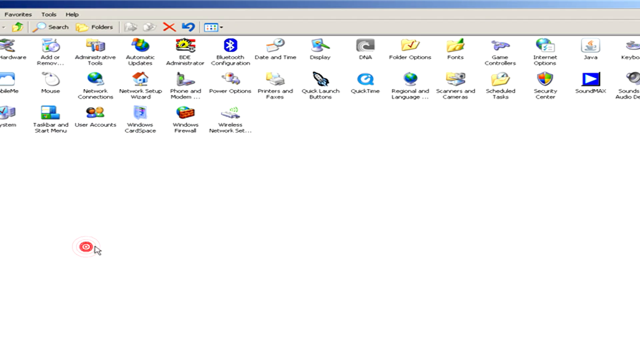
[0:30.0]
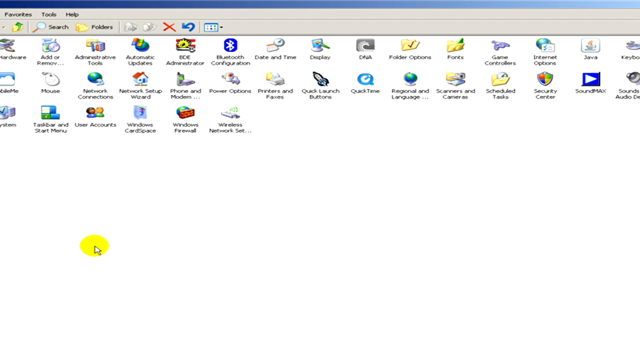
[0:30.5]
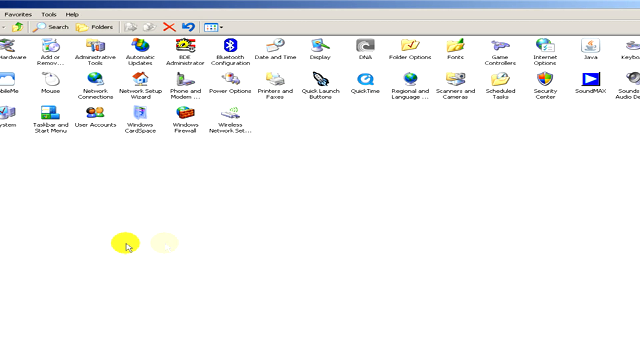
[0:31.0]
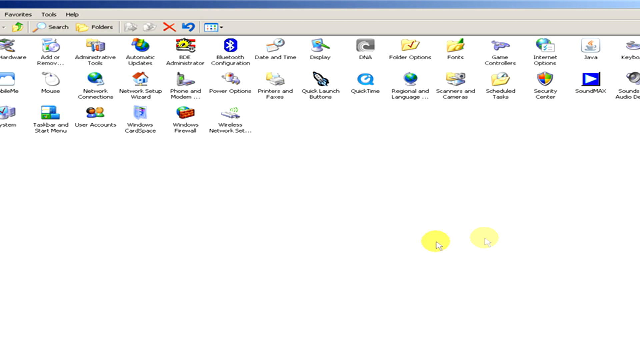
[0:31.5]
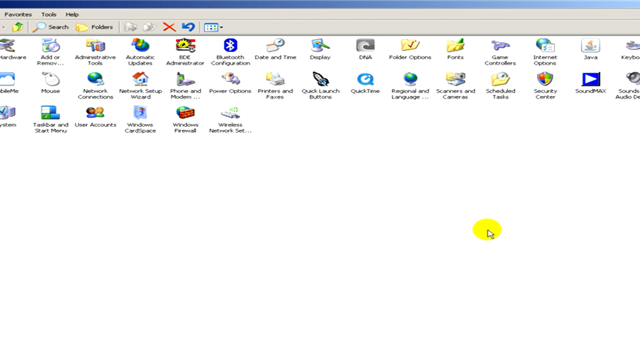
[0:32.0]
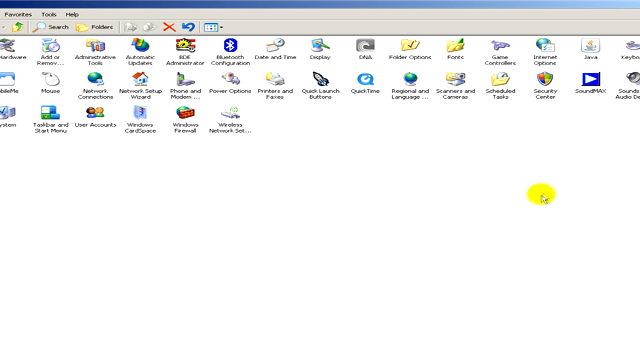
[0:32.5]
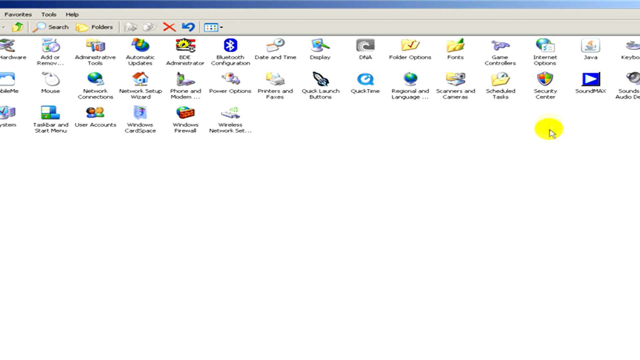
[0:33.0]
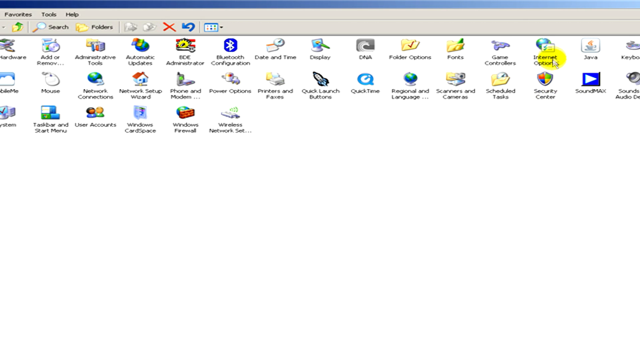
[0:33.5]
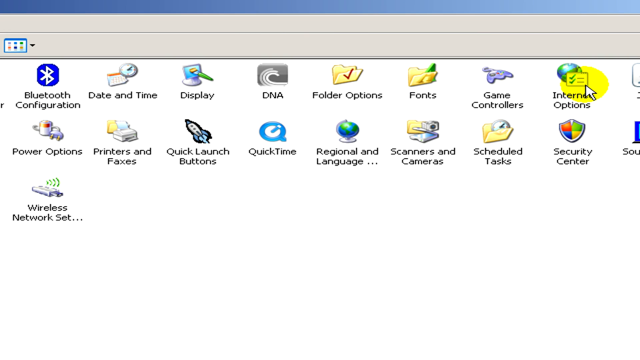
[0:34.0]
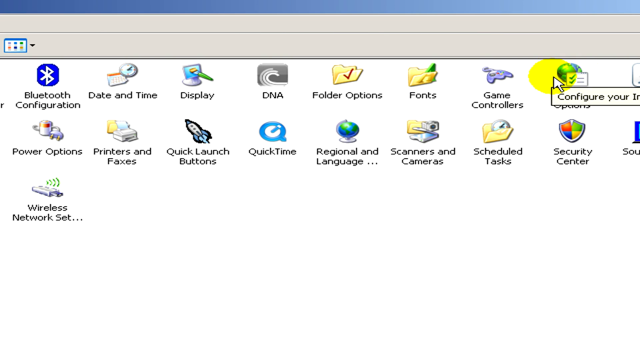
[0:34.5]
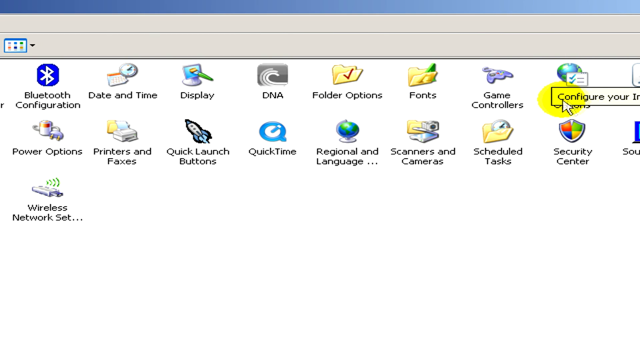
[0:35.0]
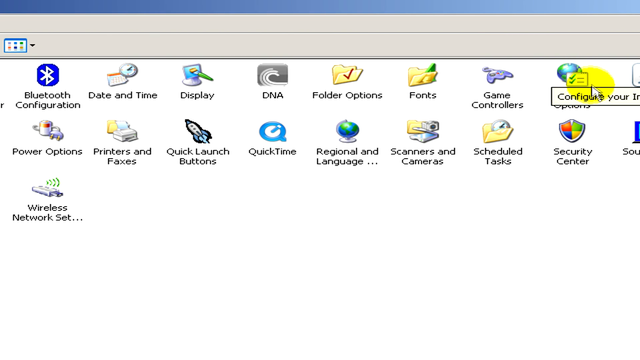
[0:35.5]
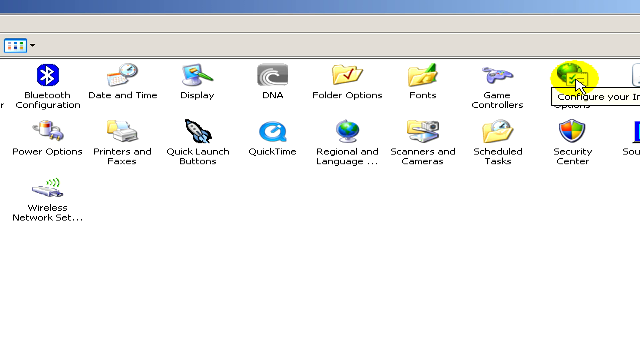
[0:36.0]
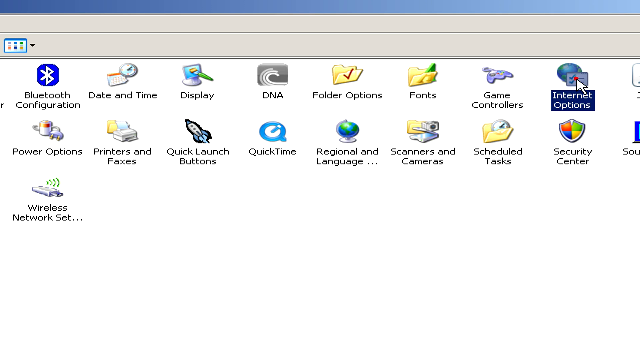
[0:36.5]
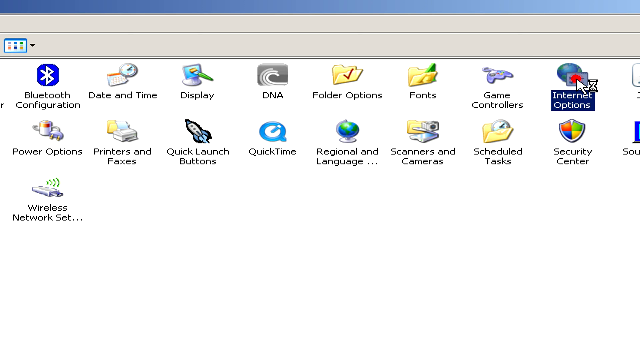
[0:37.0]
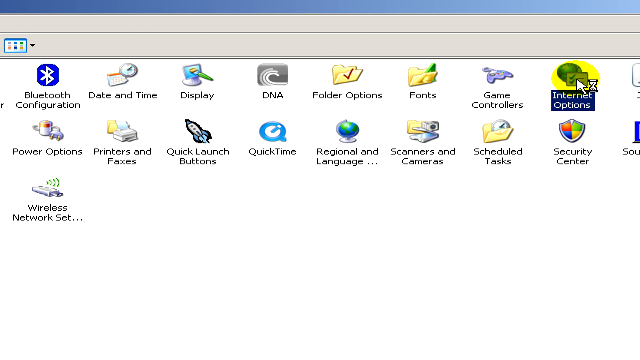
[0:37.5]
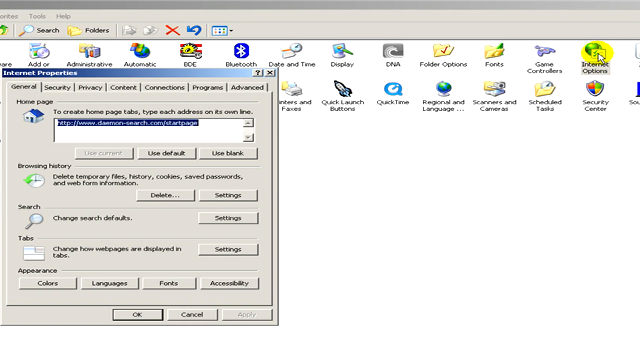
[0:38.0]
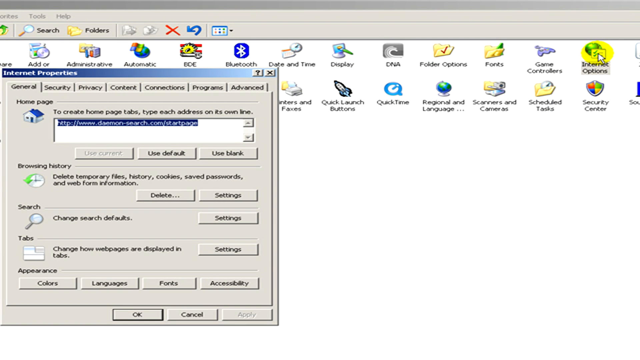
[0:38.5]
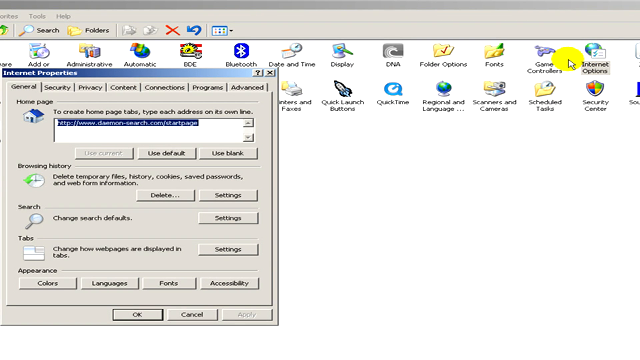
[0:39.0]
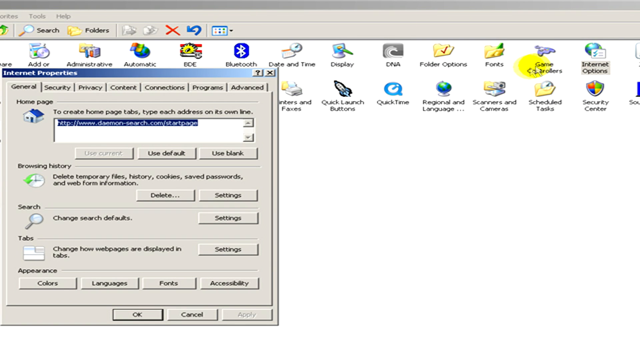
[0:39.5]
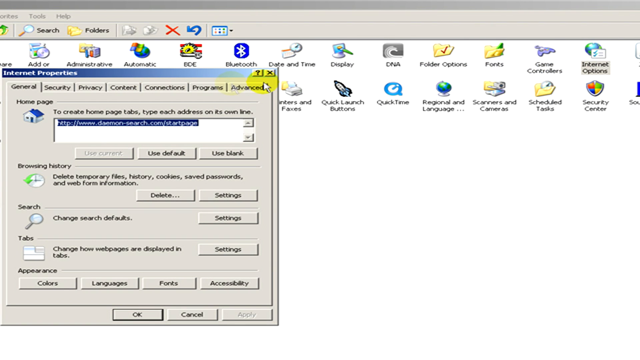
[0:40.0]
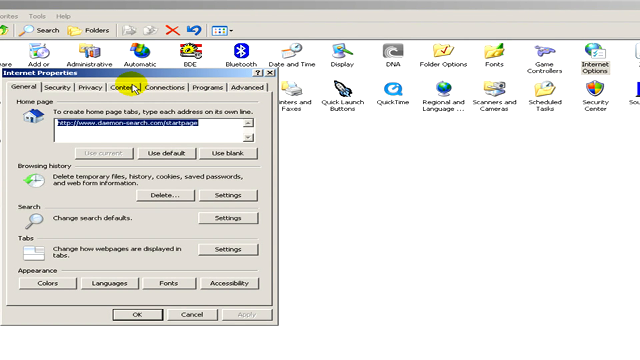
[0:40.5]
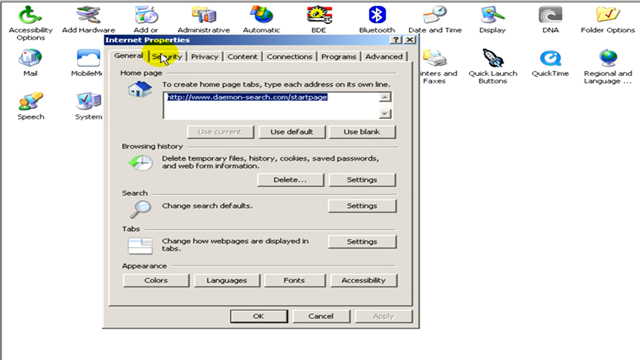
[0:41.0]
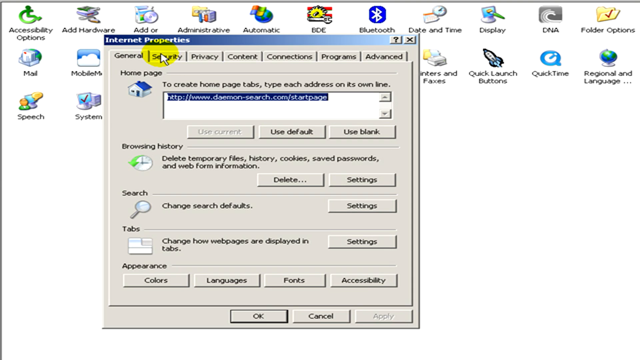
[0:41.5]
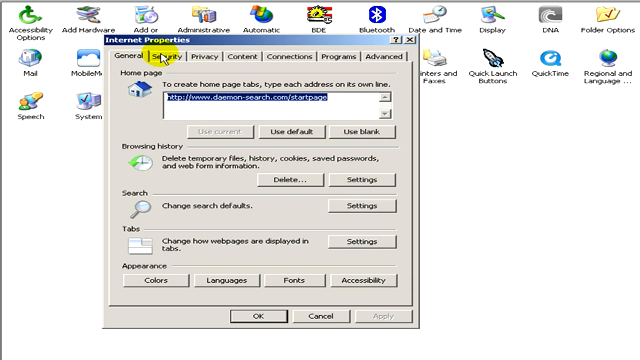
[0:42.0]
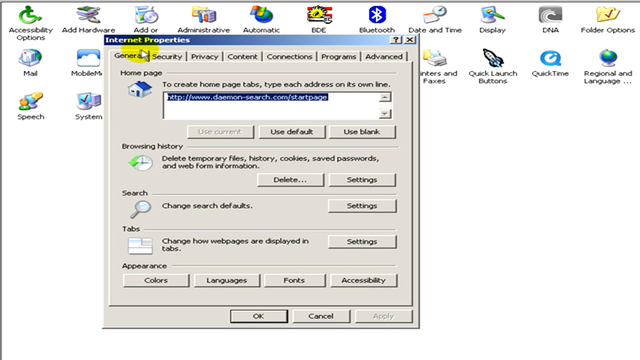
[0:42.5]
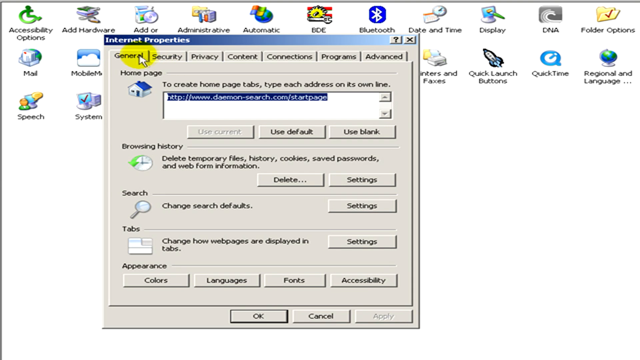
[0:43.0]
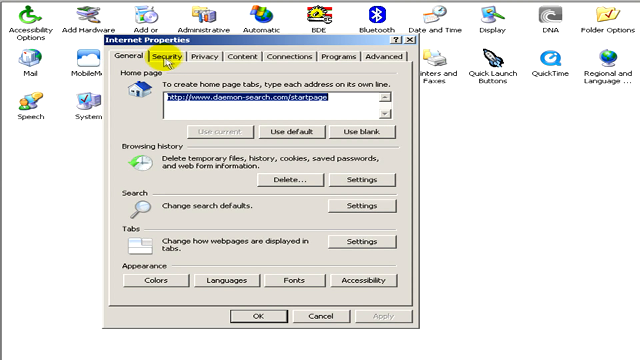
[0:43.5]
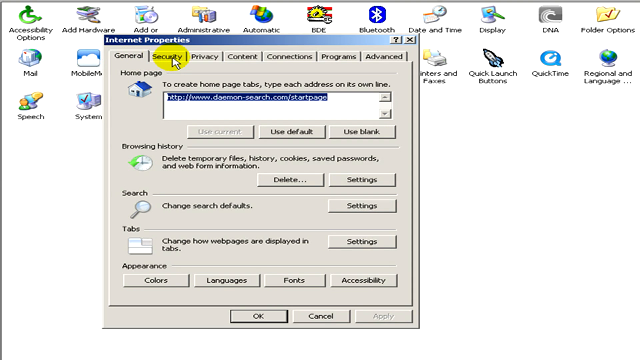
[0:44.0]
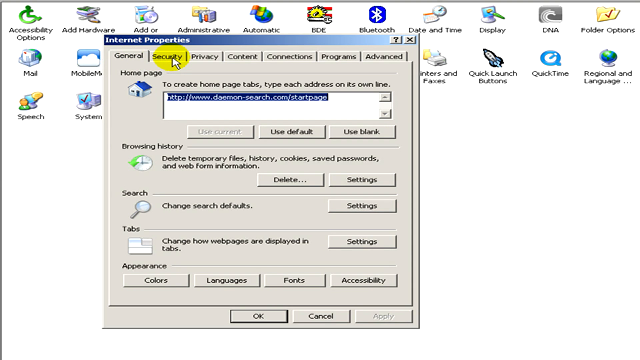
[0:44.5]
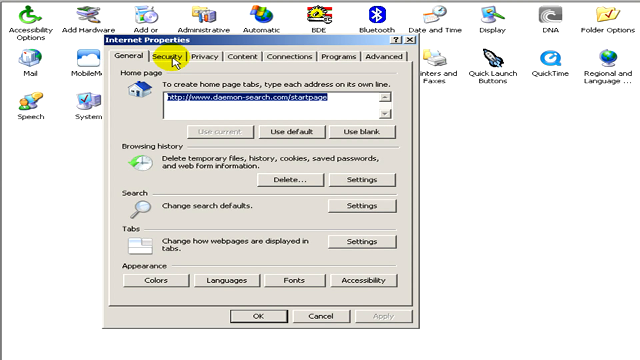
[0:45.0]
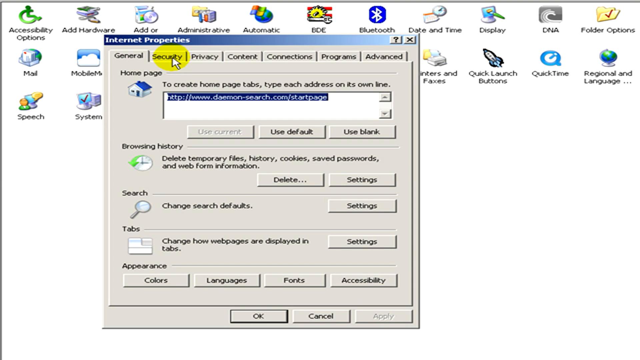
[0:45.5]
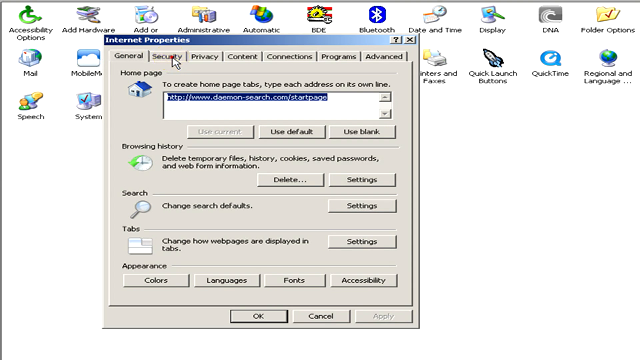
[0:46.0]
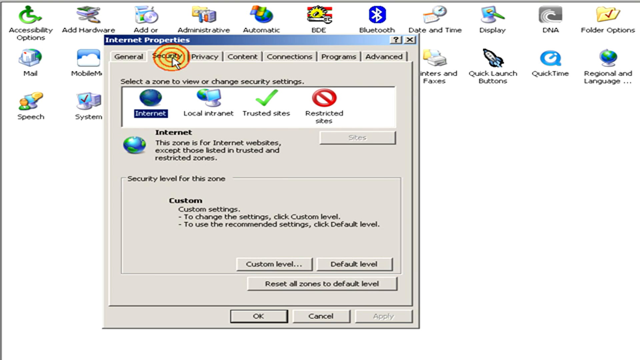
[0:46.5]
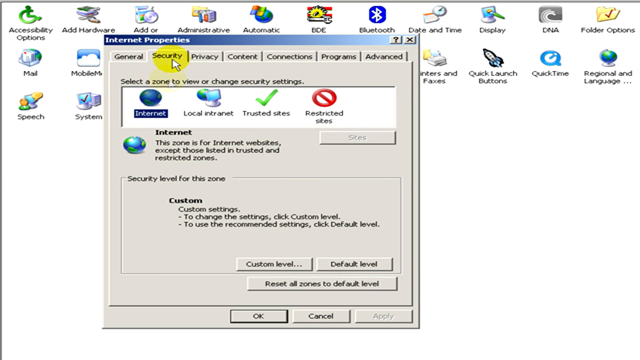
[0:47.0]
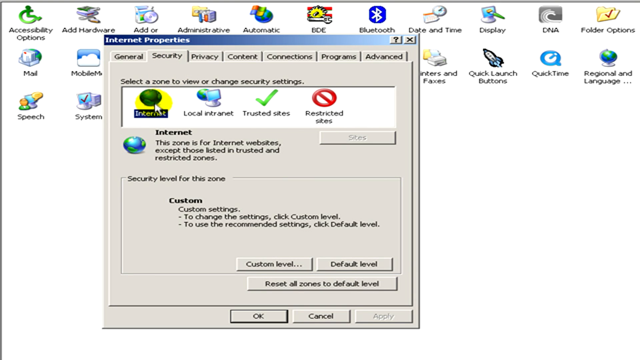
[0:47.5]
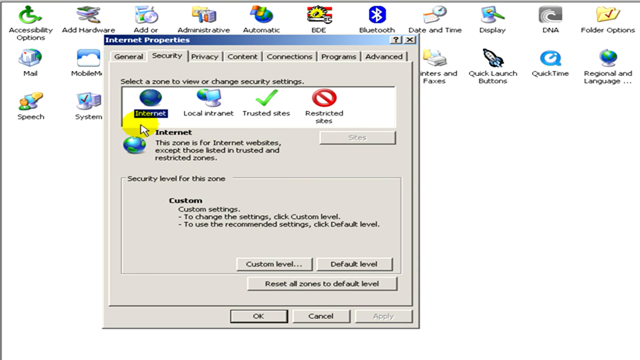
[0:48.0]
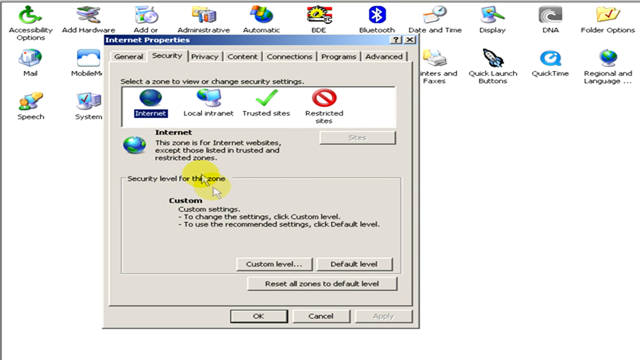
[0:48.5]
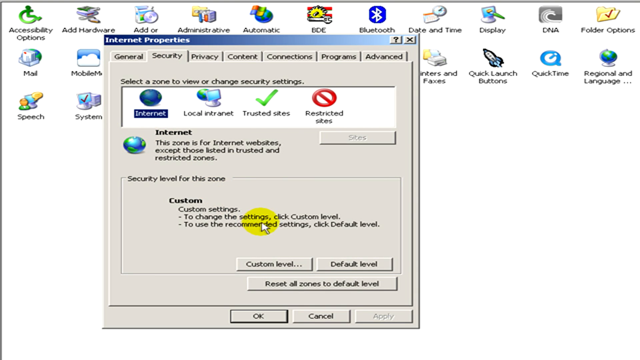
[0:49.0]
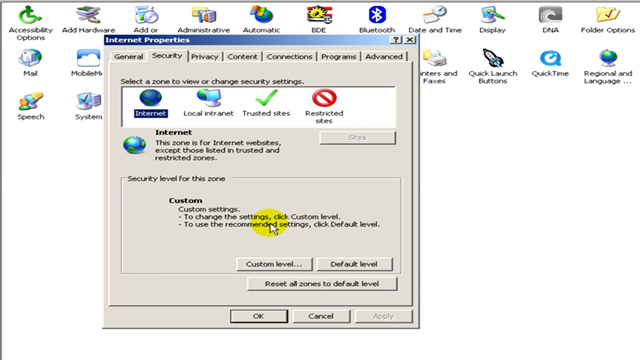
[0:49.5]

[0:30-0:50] The person navigates the newly opened control panel, which lists items such as "hardware", "add or remove programs", "administrative tools", "automatic updates", "date and time", "display", "folder options", "fonts", "game controllers", "internet options", "java", "mouse", "network connections", "network setup wizard", "power options", "printers and faxes", "quick launch buttons", "regional languages", "scanners and cameras", "schedule tasks", "security center", "sound max", "taskbar and start menu", "user accounts", "windows firewall" and "wireless network". They select Internet Options, and a window titled "Internet Properties" opens on the General tab, where a home page section has one address in it. They then switch to the Security tab, which reads "select a zone to view or change security settings".